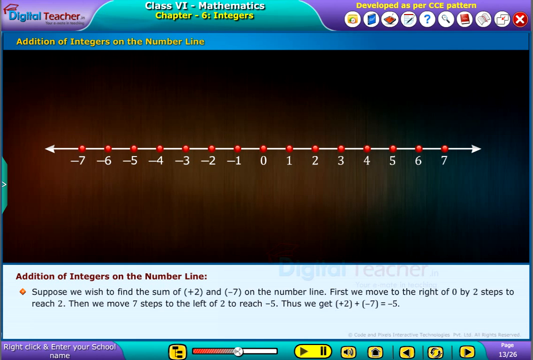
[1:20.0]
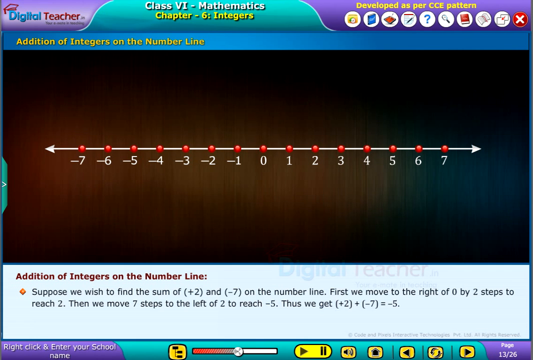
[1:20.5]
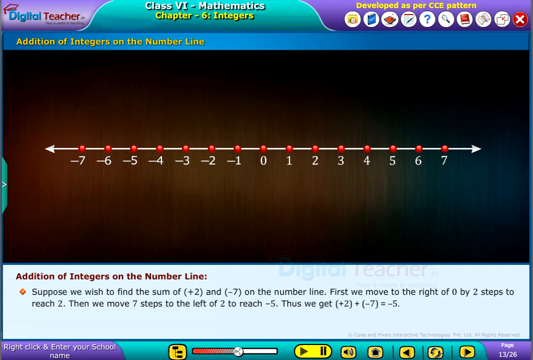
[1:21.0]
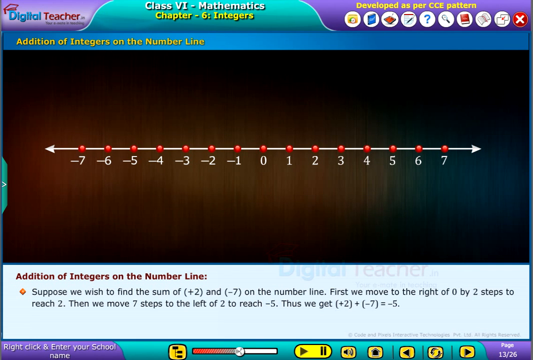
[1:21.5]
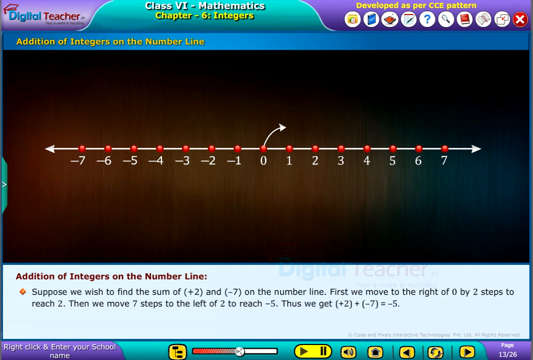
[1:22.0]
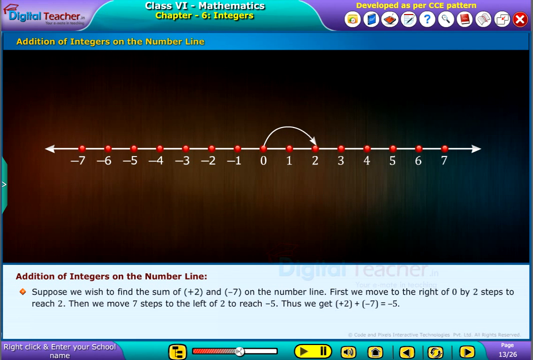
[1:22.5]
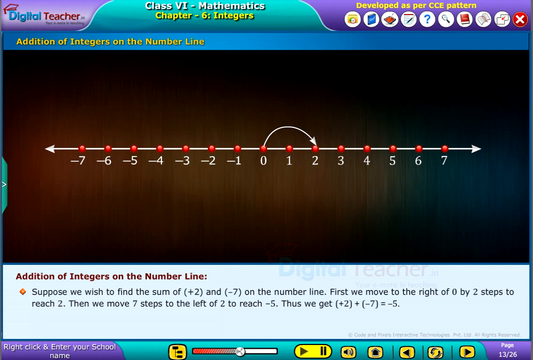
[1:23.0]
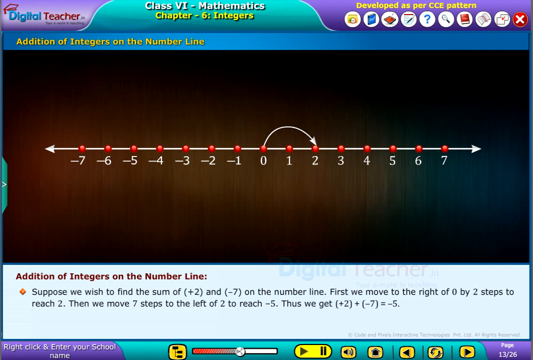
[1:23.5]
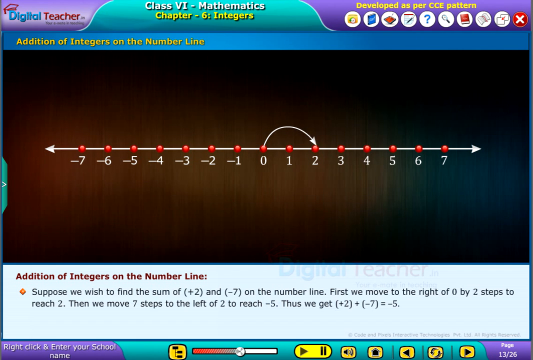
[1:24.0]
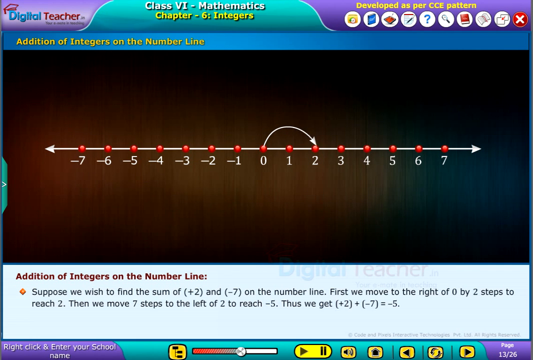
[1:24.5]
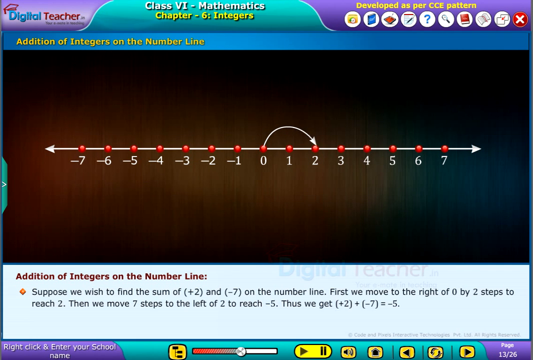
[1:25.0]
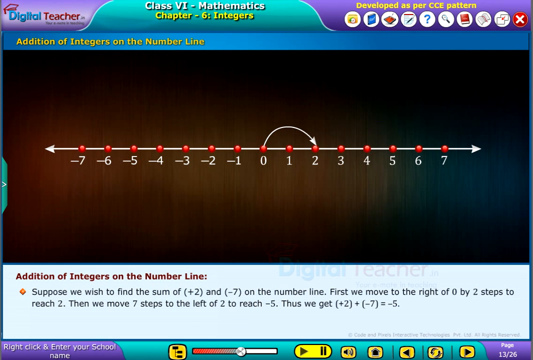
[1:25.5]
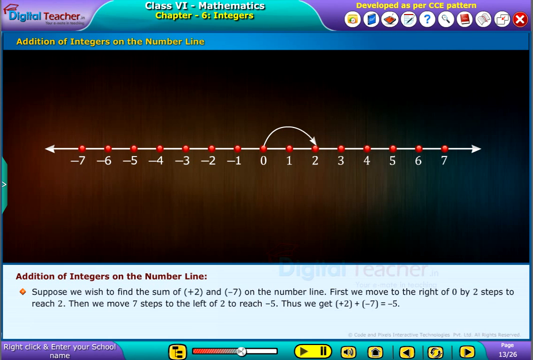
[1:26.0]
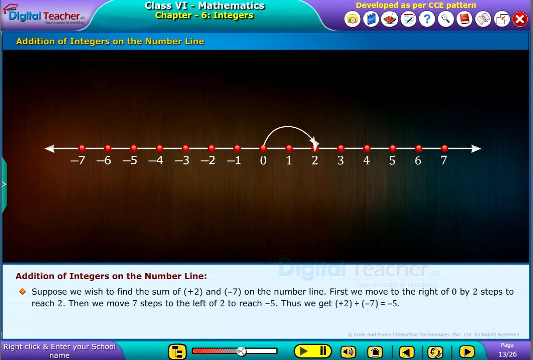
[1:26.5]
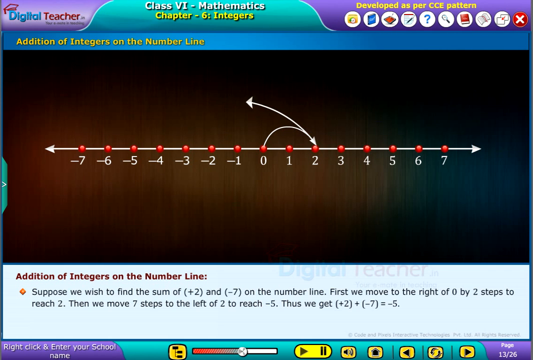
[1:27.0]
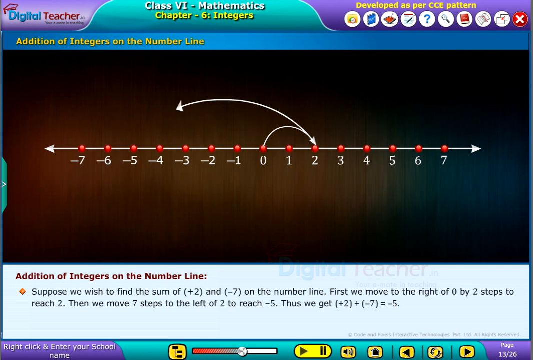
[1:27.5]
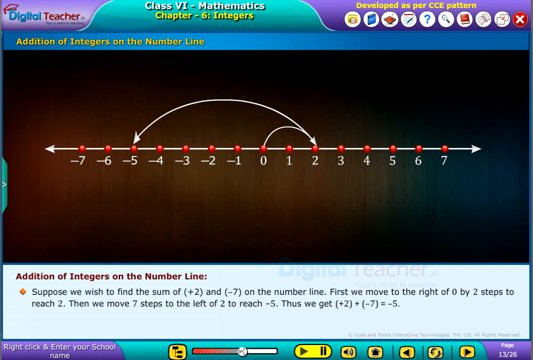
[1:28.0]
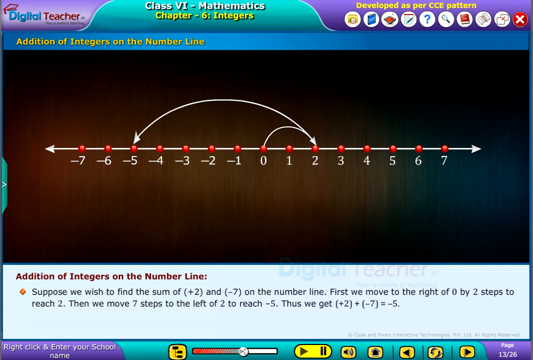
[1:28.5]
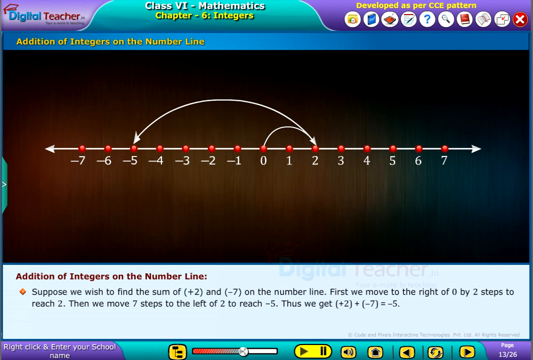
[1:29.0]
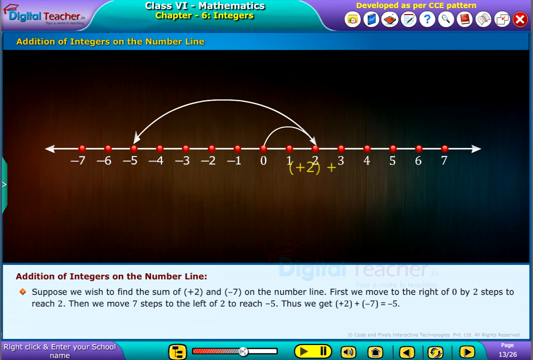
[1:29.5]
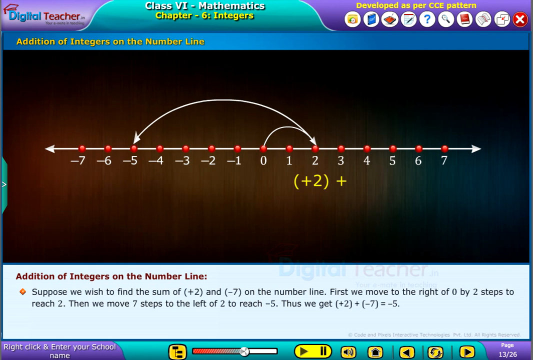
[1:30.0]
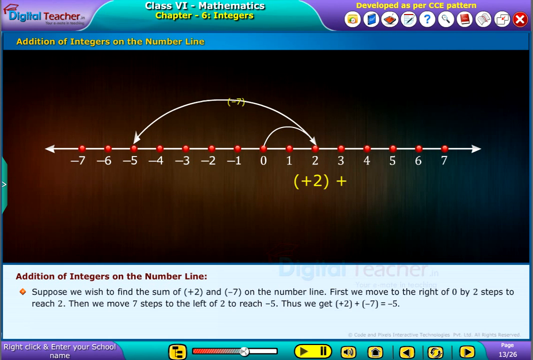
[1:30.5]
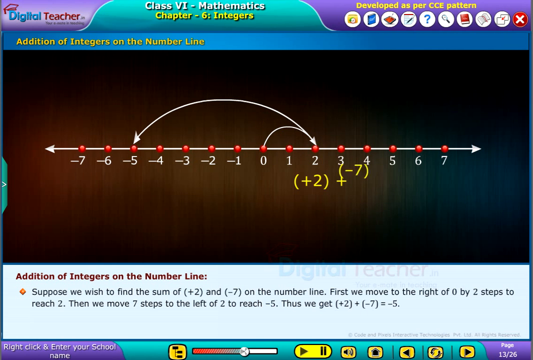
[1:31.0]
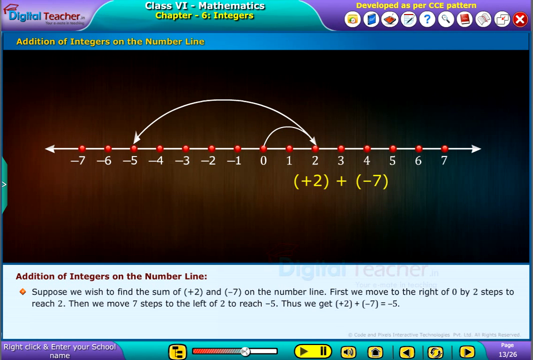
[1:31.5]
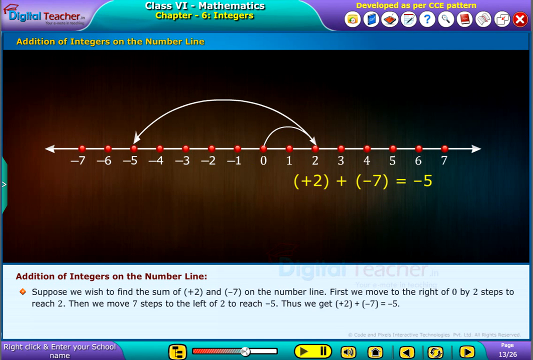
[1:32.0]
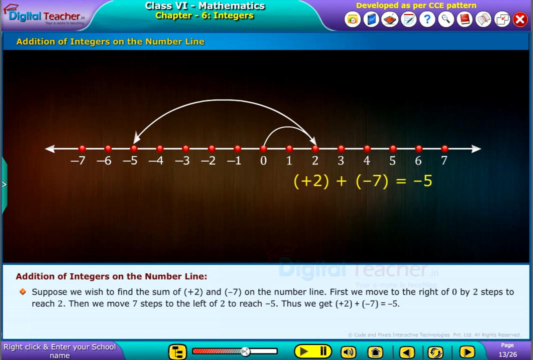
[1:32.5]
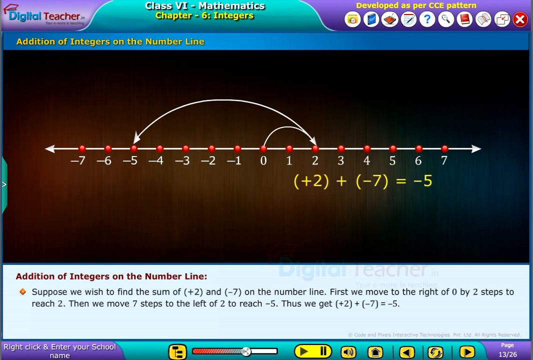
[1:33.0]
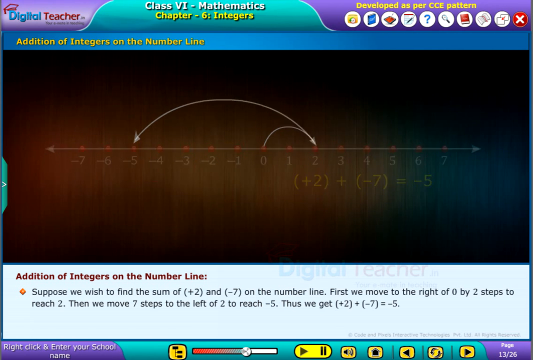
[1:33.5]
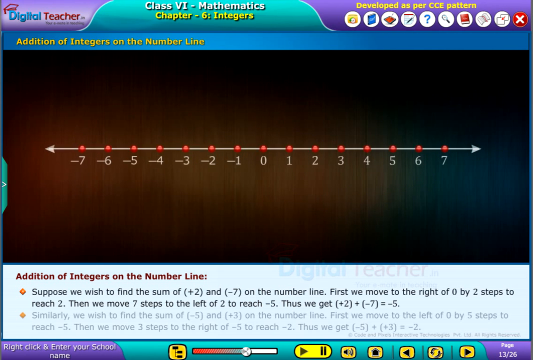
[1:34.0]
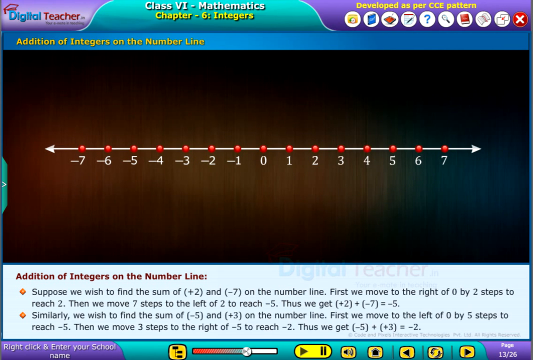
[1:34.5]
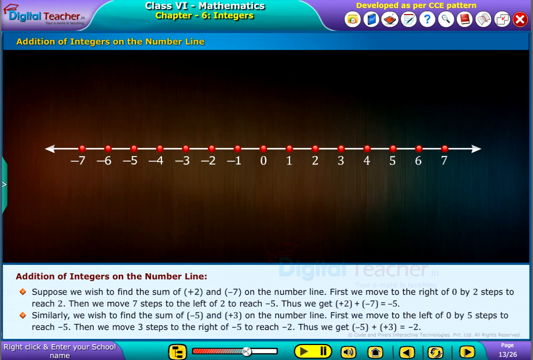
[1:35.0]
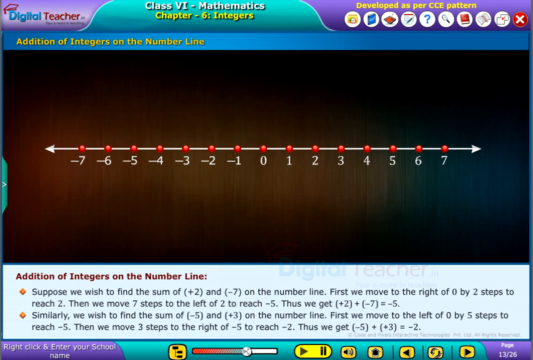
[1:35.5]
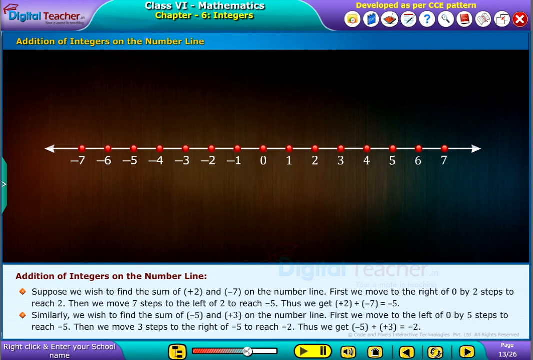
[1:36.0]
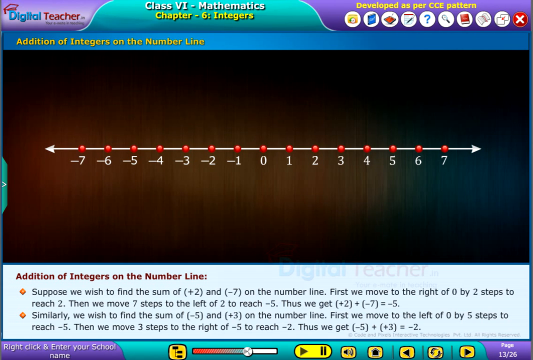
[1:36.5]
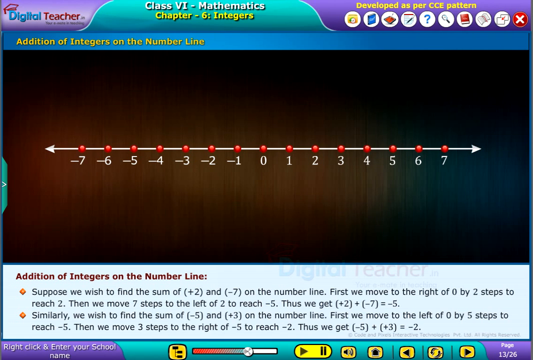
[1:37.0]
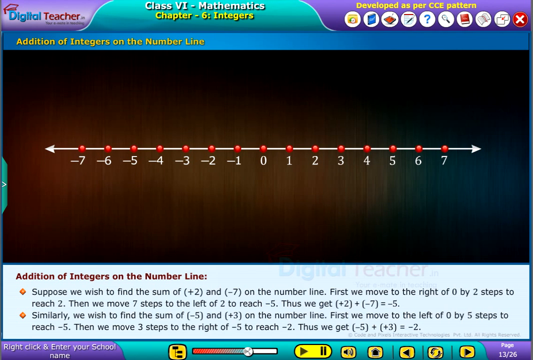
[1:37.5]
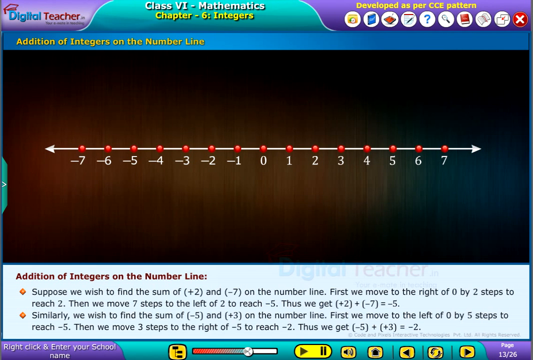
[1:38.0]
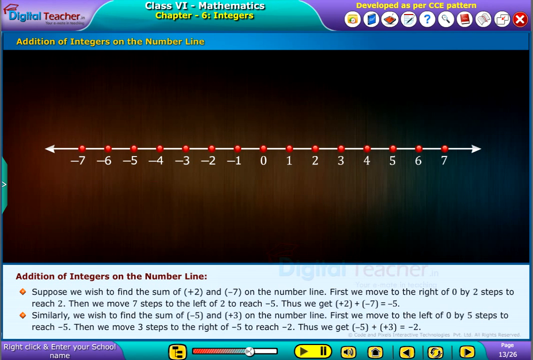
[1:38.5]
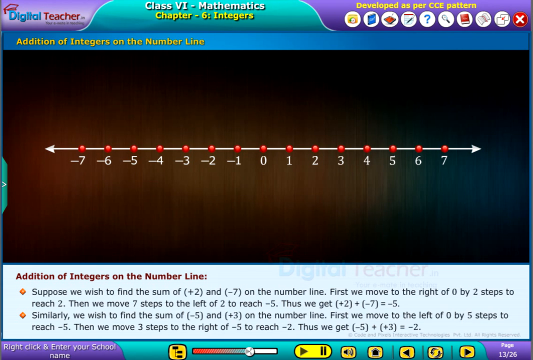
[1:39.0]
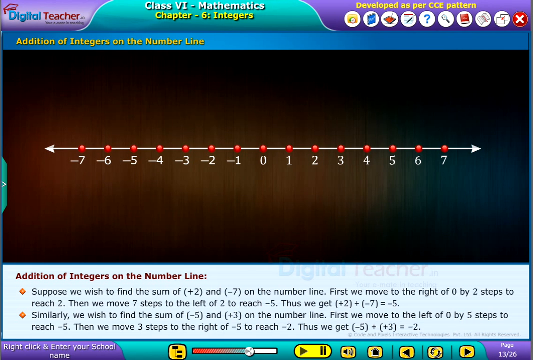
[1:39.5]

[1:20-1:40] A white arrow on the number line jumps from 0 to 2 and then backwards to negative 5, and yellow text underneath the number line reads "positive 2 plus negative 7 equals negative 5". The number line then becomes bare again, showing numbers ranging from negative 7 to positive 7, and another bullet point appears in the content at the bottom: "similarly we wish to find the sum of negative 5 and plus 3 on the number line. First you move to the left of 0 by 5 steps to reach negative 5 then we move 3 steps to the right of negative 5 to reach negative 2", followed by the result negative 5 plus positive 3 equals negative 2.